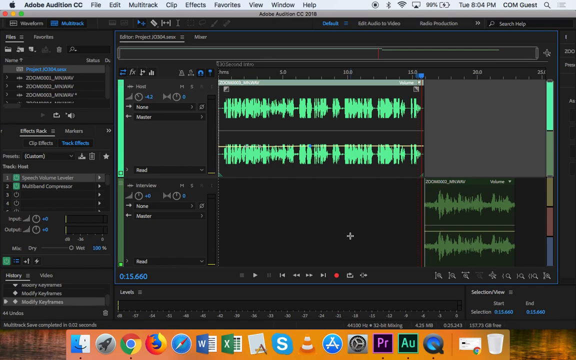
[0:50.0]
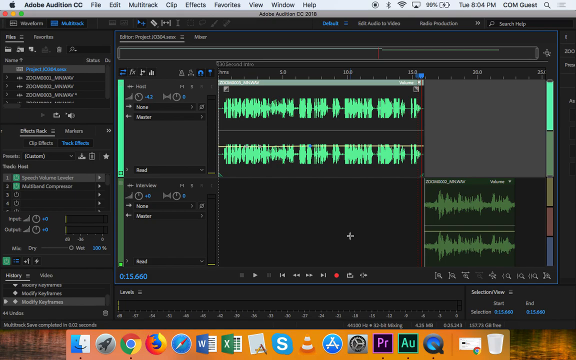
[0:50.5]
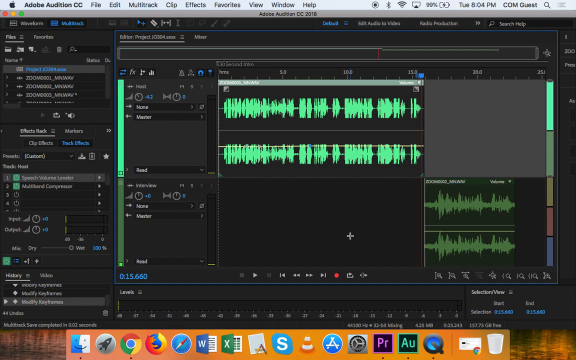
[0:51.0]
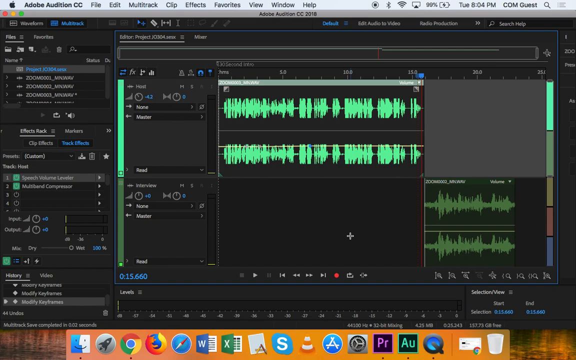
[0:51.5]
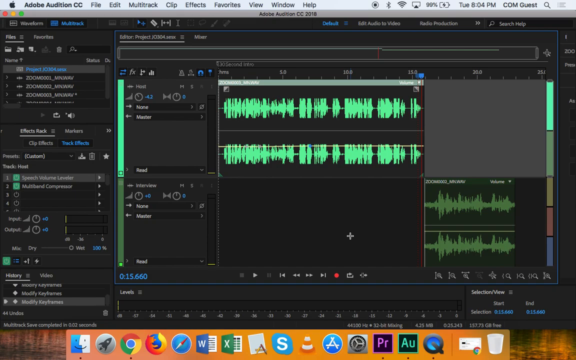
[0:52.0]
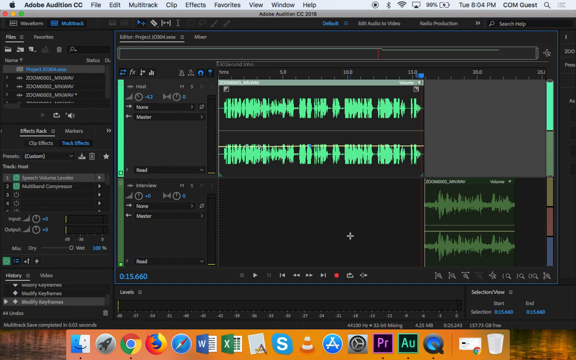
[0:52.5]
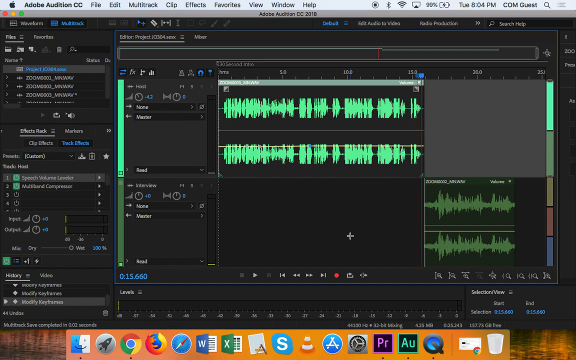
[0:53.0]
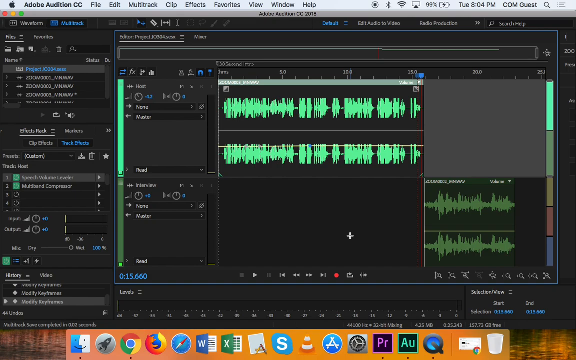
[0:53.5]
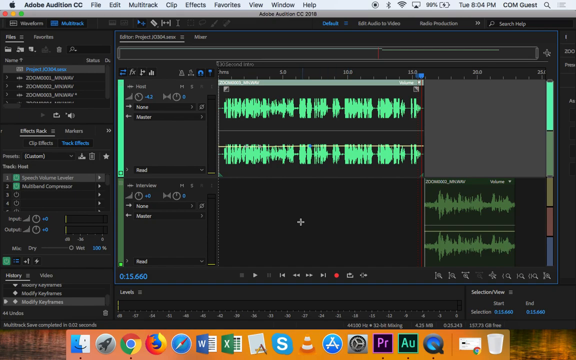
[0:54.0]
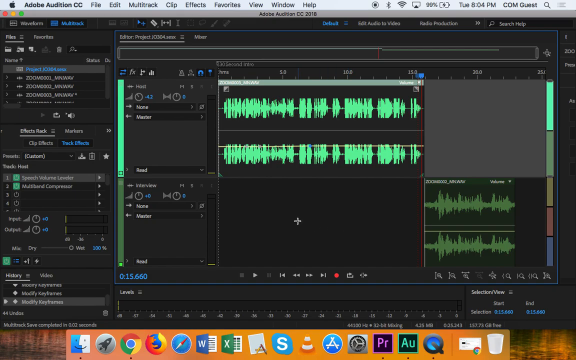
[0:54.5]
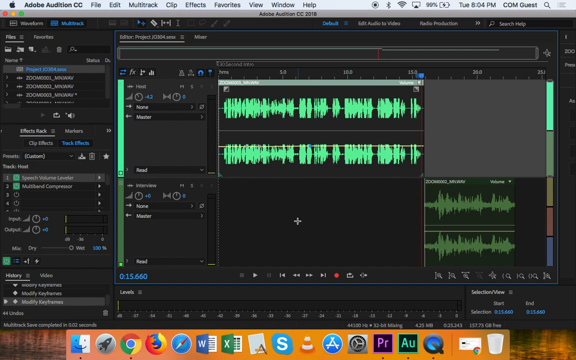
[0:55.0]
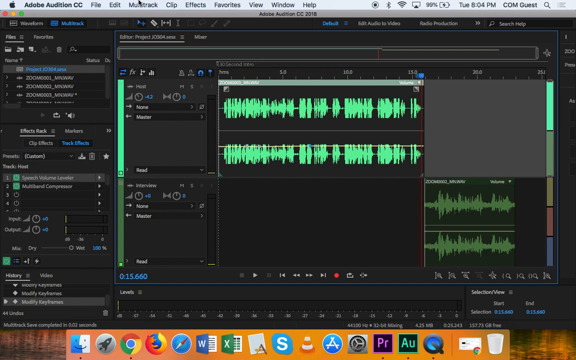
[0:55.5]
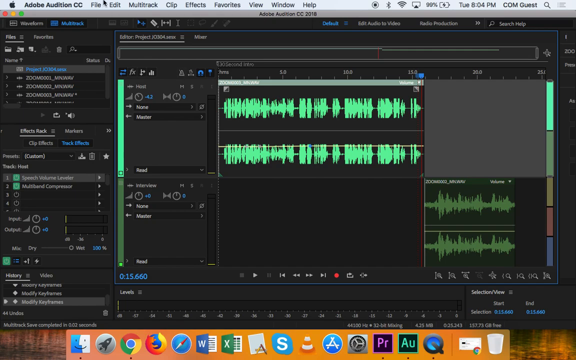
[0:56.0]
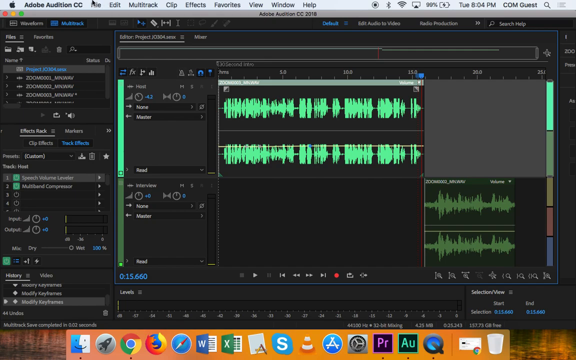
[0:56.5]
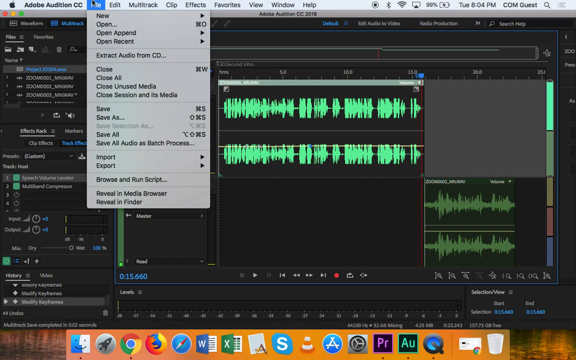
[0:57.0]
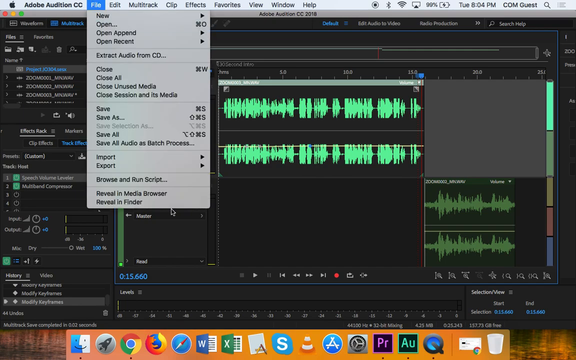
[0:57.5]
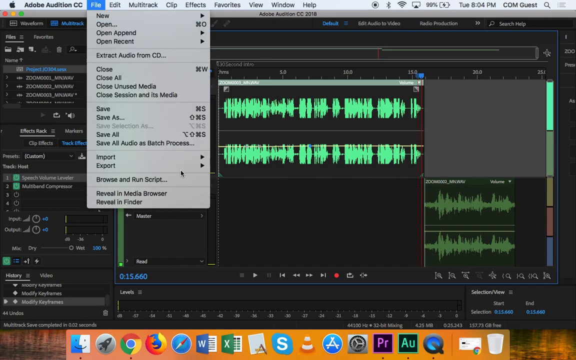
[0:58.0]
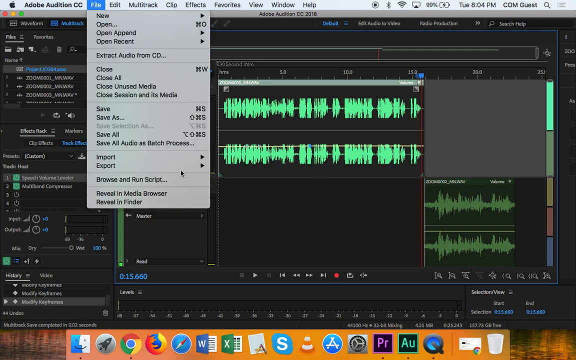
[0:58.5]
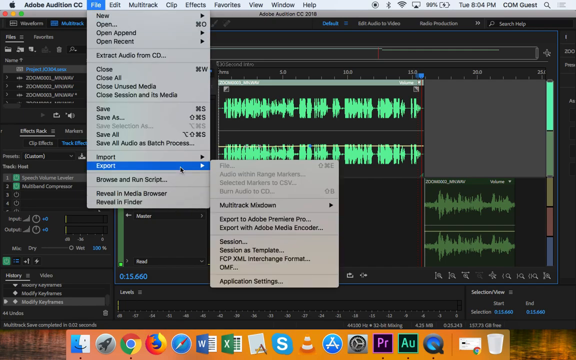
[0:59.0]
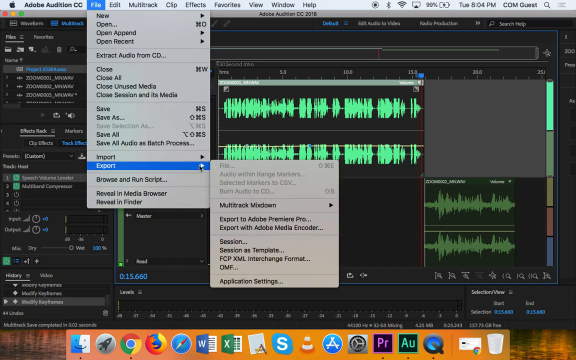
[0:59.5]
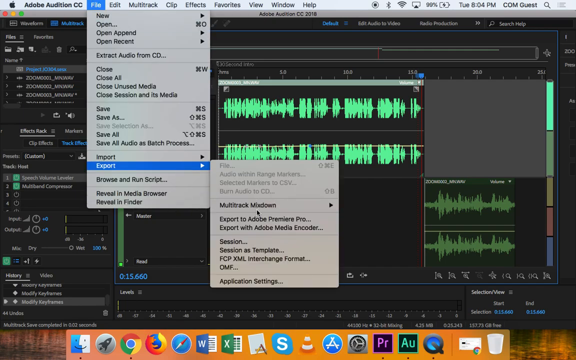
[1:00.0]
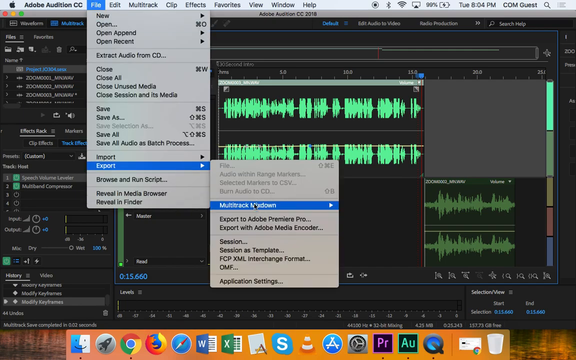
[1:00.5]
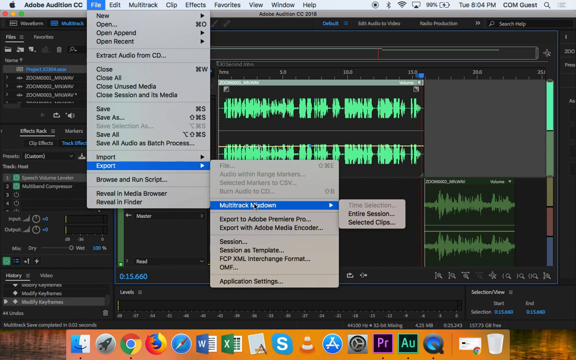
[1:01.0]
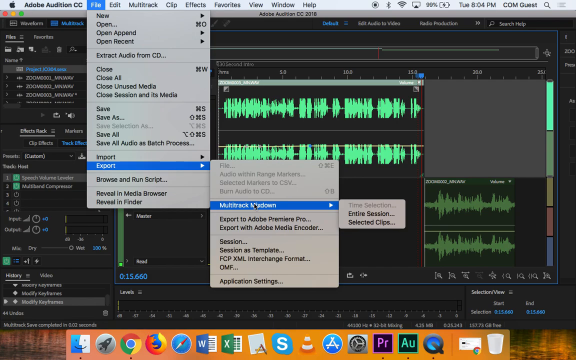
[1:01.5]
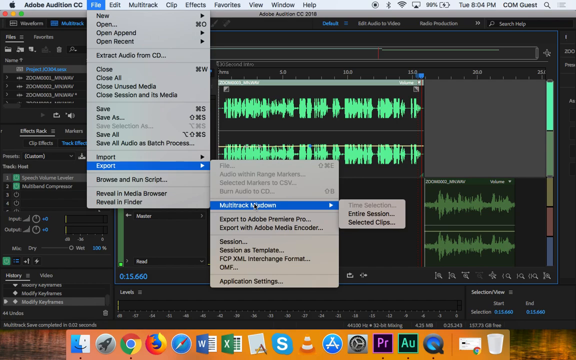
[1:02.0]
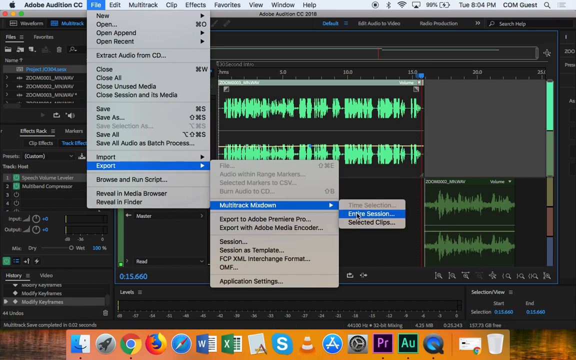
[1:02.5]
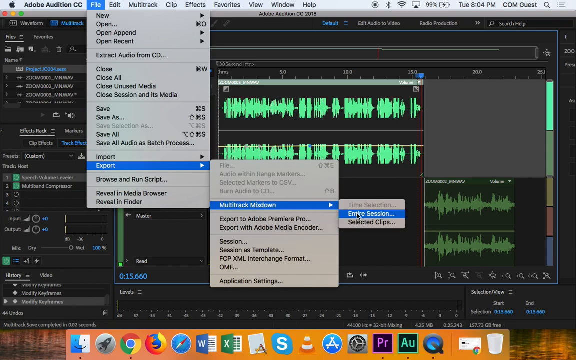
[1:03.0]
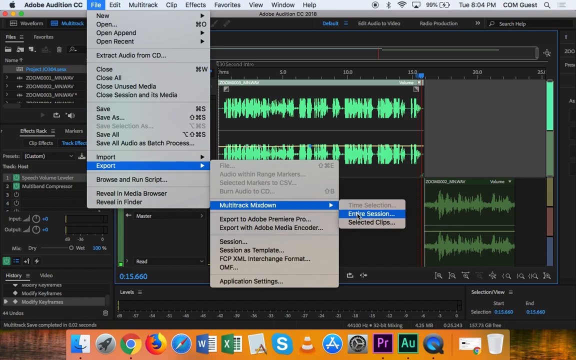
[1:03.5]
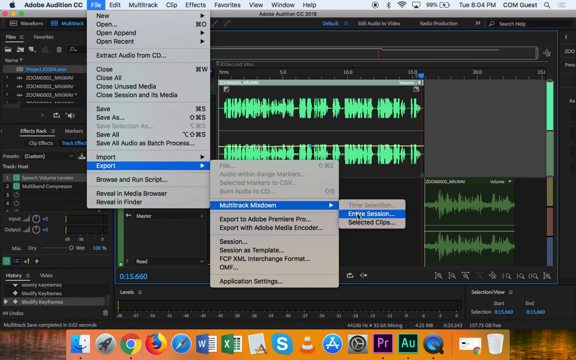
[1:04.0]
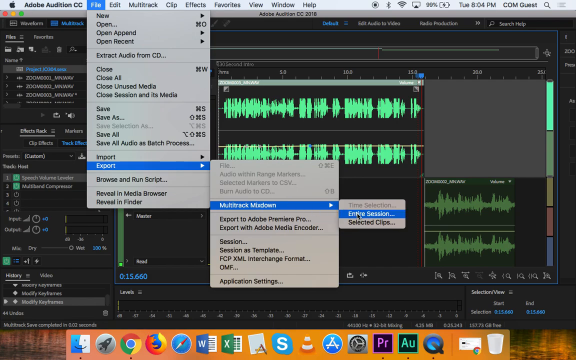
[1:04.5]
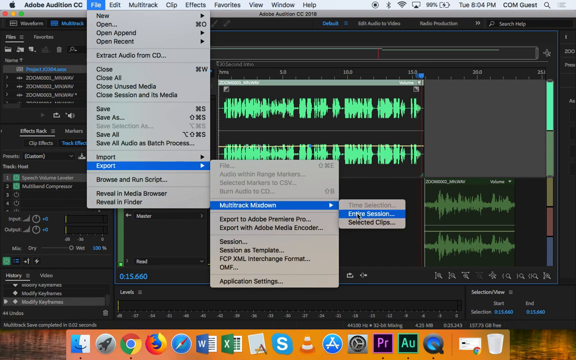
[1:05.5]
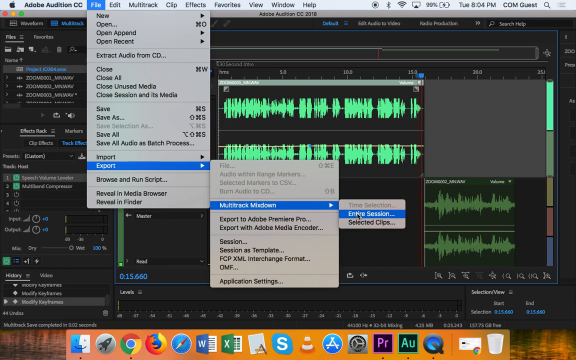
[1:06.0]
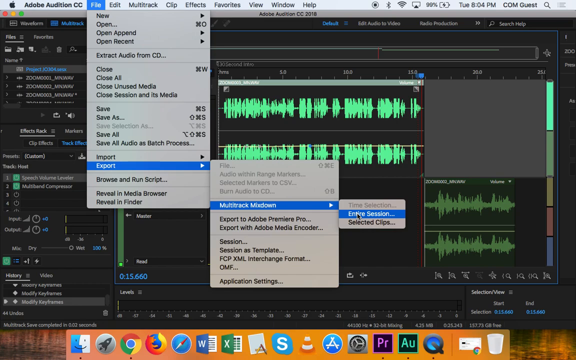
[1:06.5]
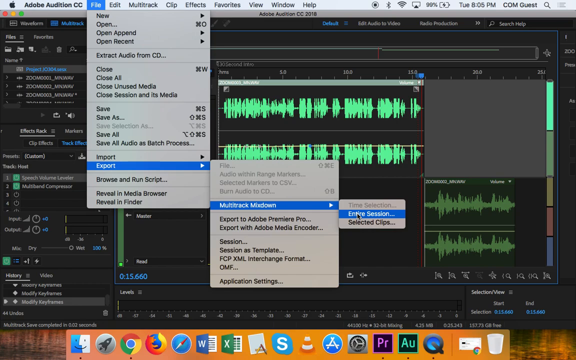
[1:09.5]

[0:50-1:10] Someone is recording their screen while using Adobe Audition CC on a MacBook, either editing various sound files or music together to form a larger song. The screen is largely black with the editing program in focus. The Mac interface along the very top shows various menu options, and various unselected apps are at the bottom of the screen. The workspace with the currently selected project is on the right side of the screen, showing various green sound waves placed onto it, each with its own mixer and volume control options. The screen stays like this for some time. The mouse cursor, a crosshair, is over empty space in the bottom section of sound files in the project. The user quickly moves the mouse upward, briefly passing over multitrack at the very top of the interface, then brings it quickly back down toward the first, top sound wave. They then move the cursor over File and click it, opening the menu, move quickly down through various options to Export, click Export, and move to Multitrack Mixdown, which opens an additional menu, and they click on Entire Session.